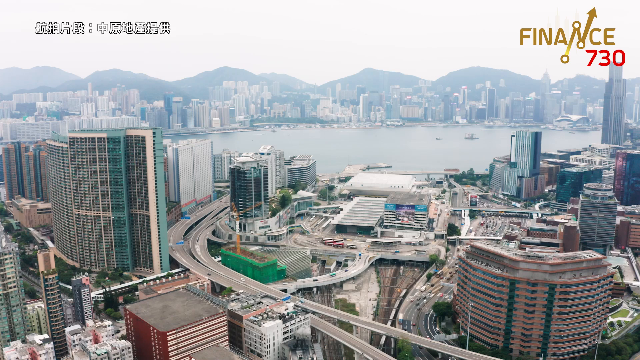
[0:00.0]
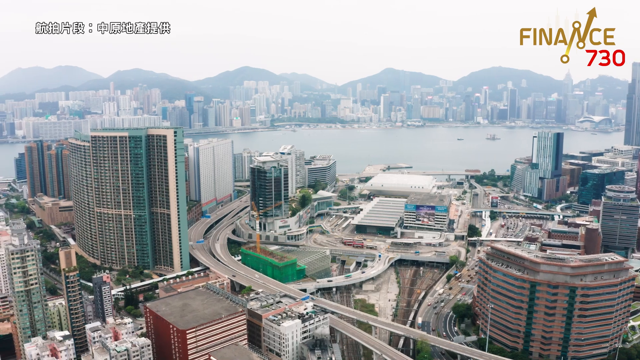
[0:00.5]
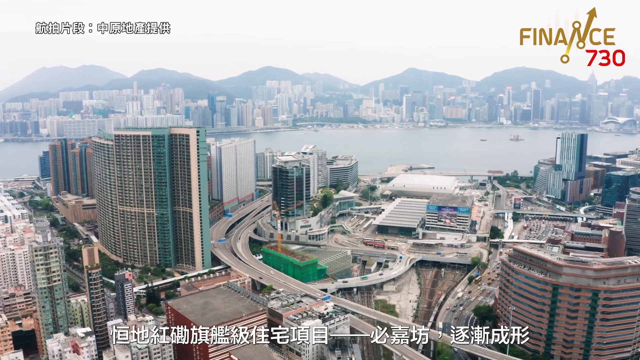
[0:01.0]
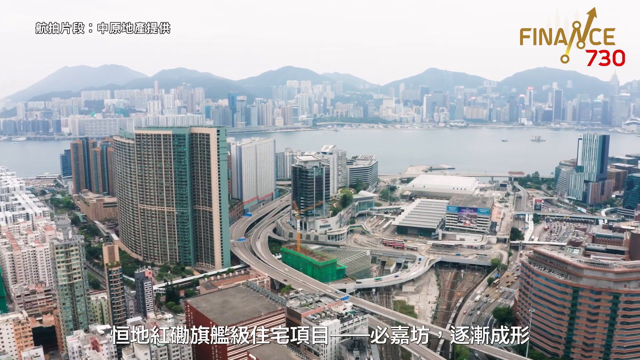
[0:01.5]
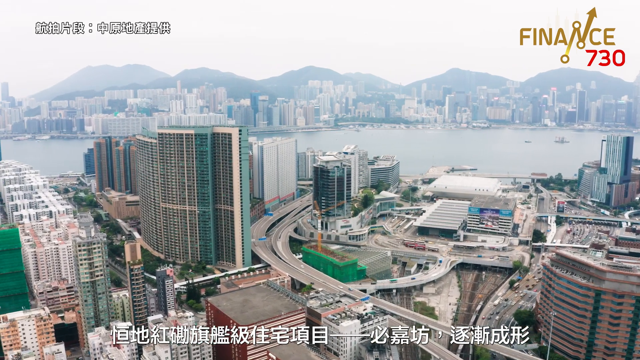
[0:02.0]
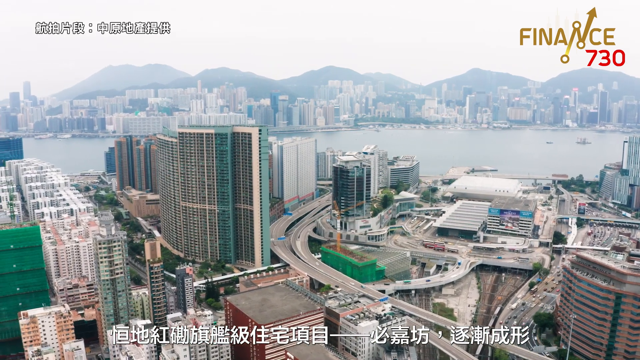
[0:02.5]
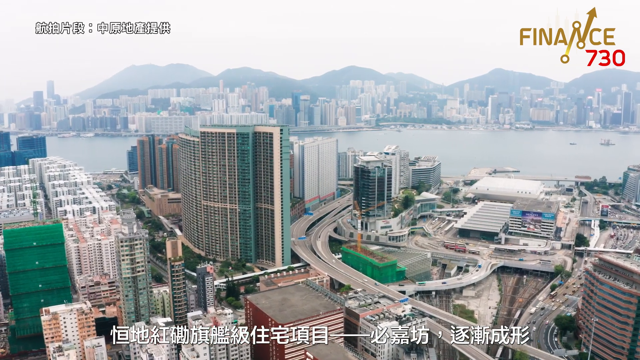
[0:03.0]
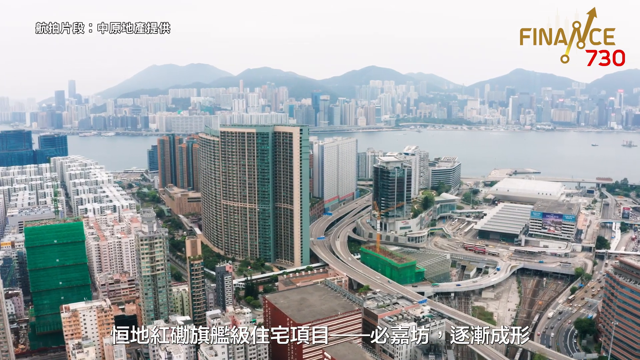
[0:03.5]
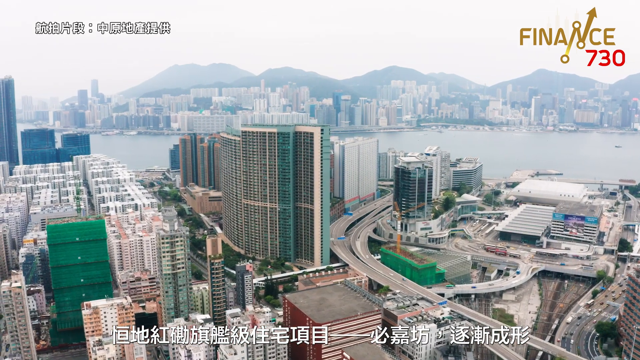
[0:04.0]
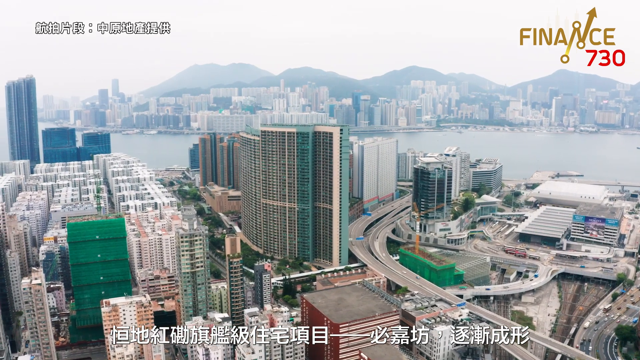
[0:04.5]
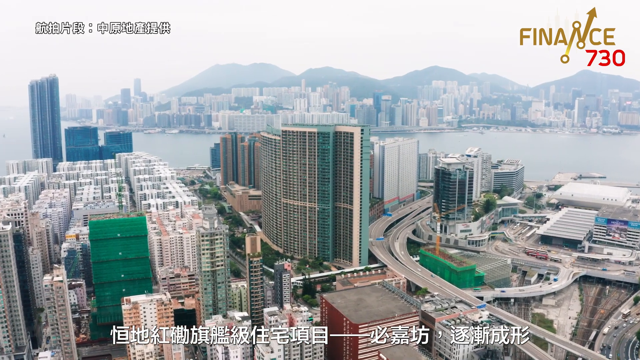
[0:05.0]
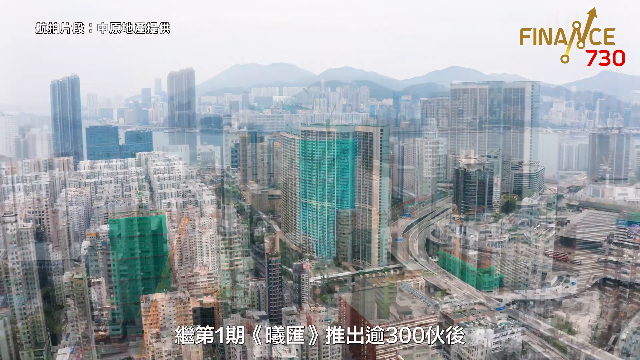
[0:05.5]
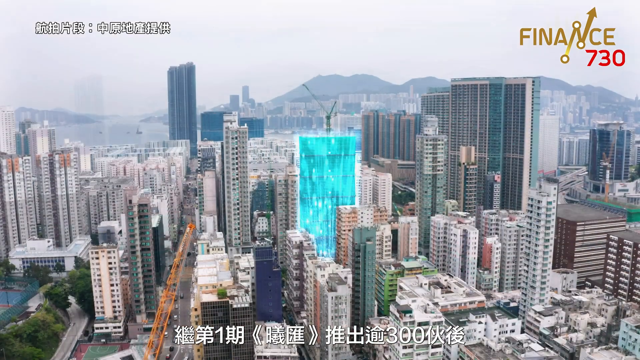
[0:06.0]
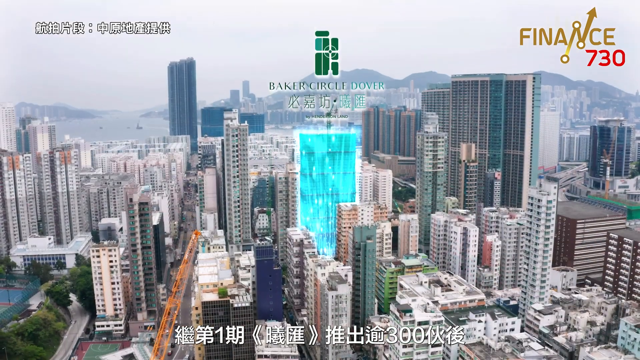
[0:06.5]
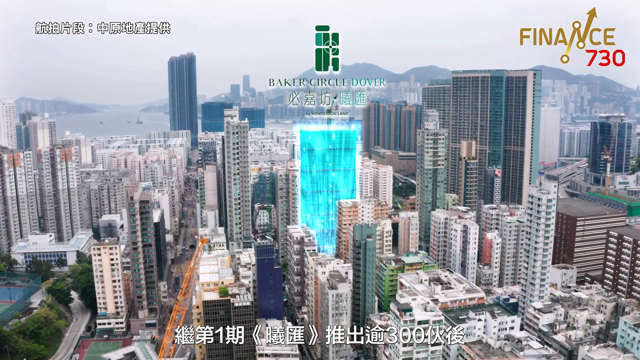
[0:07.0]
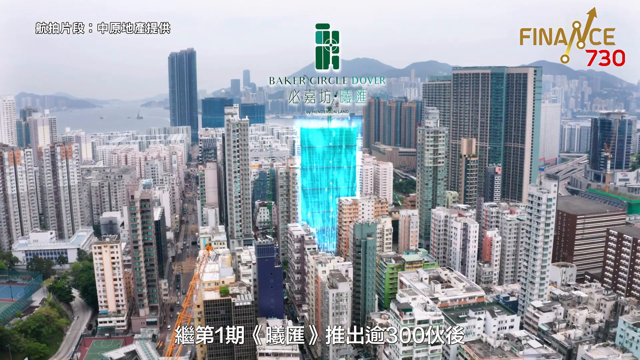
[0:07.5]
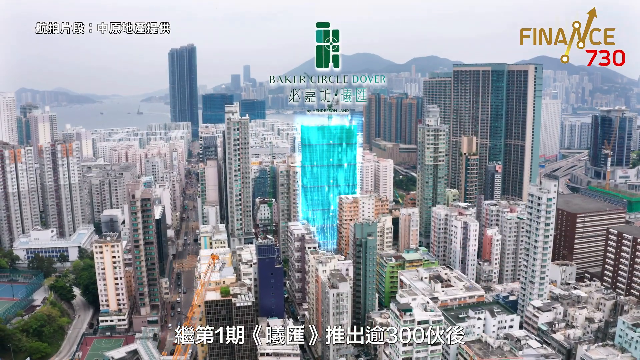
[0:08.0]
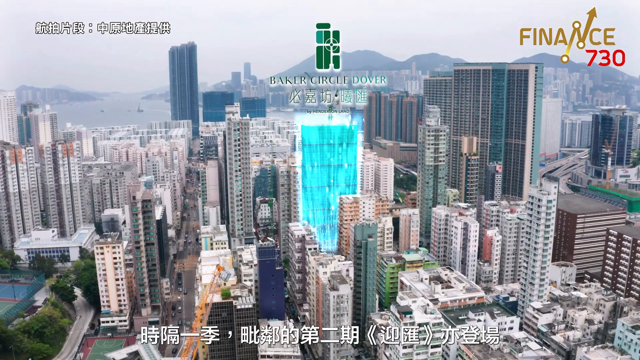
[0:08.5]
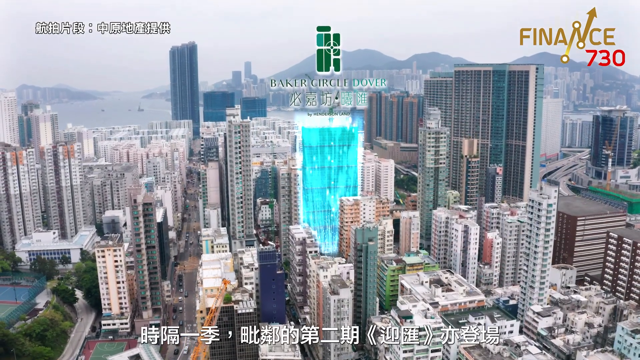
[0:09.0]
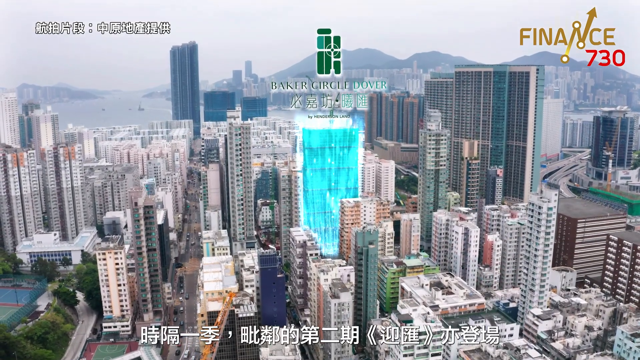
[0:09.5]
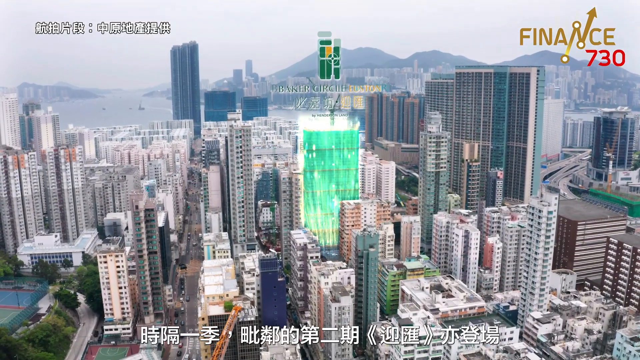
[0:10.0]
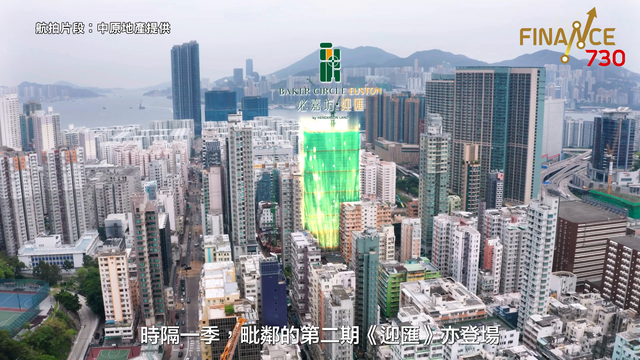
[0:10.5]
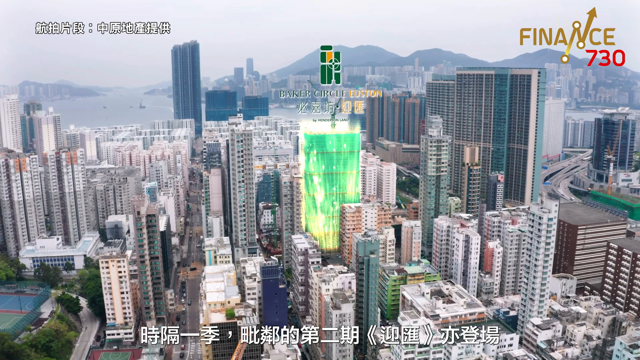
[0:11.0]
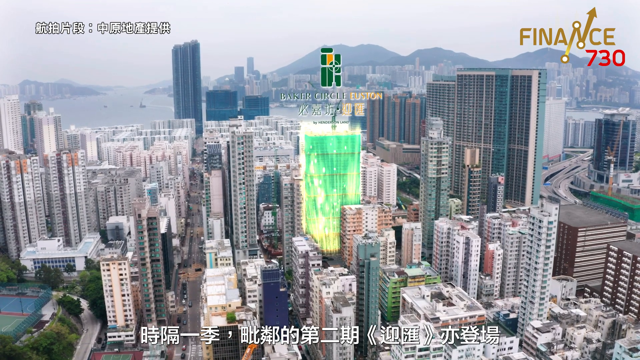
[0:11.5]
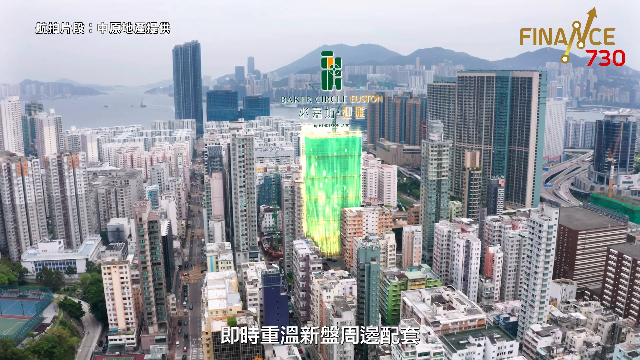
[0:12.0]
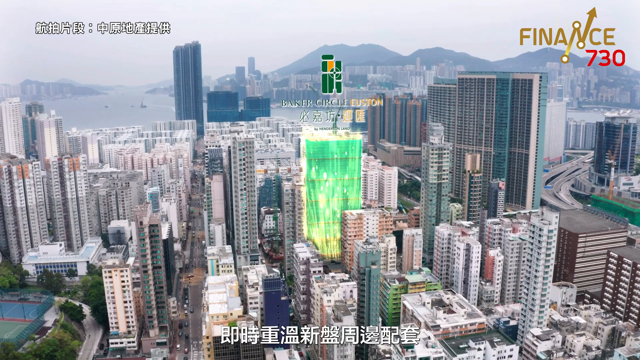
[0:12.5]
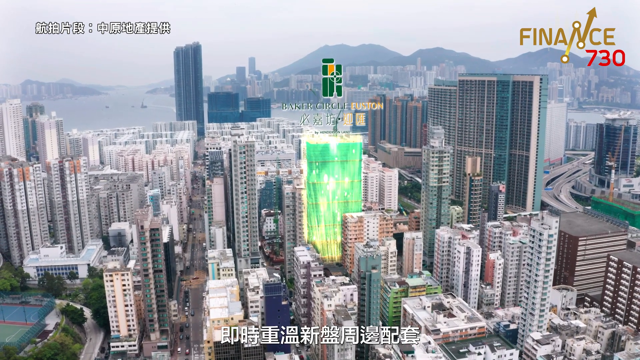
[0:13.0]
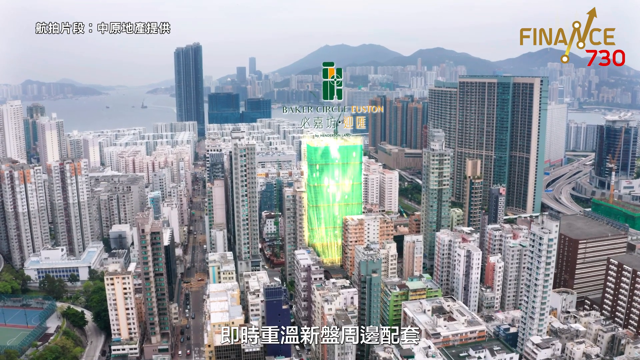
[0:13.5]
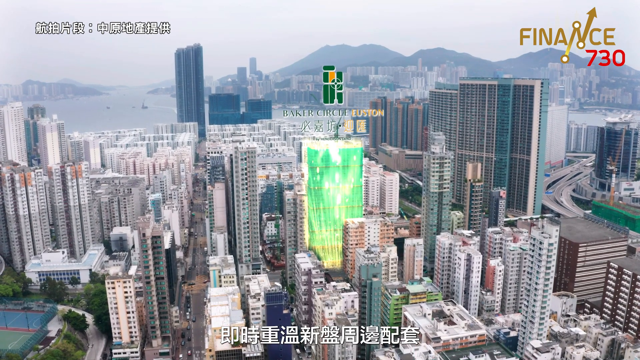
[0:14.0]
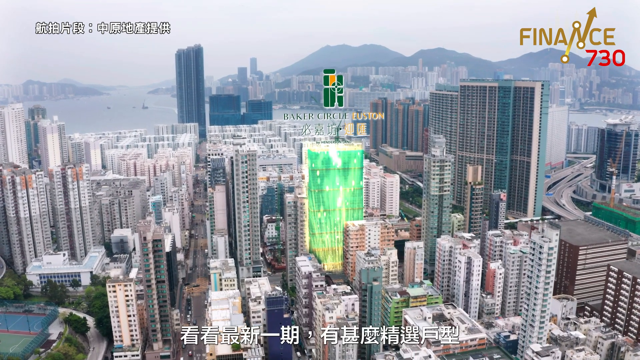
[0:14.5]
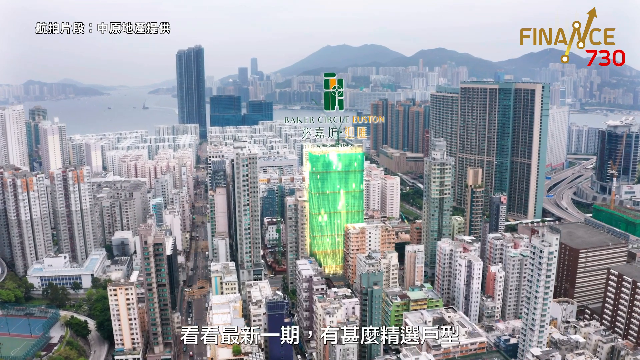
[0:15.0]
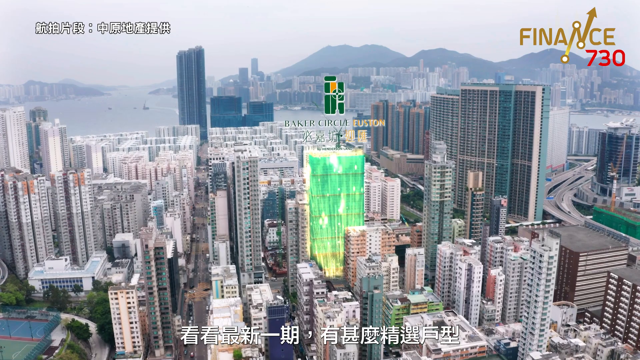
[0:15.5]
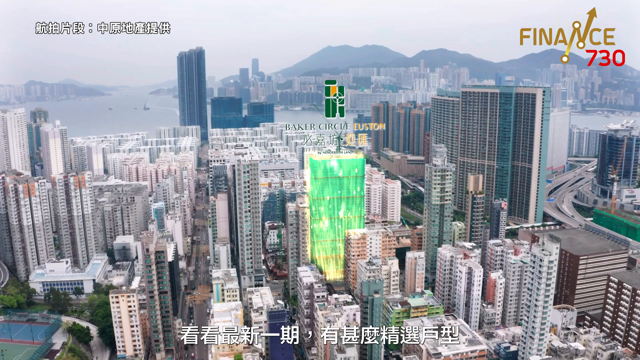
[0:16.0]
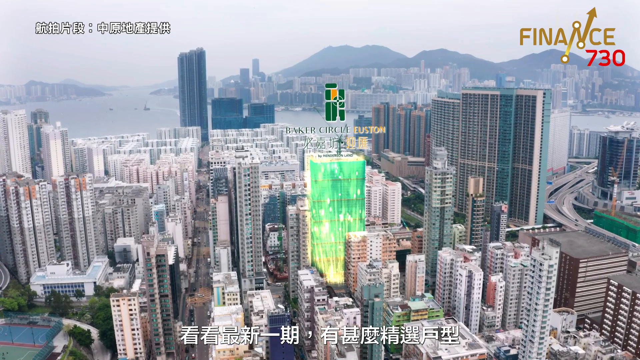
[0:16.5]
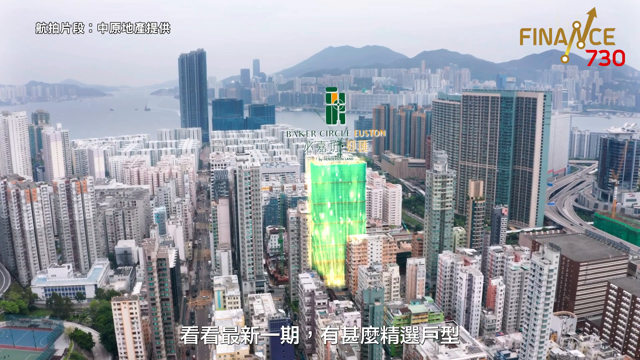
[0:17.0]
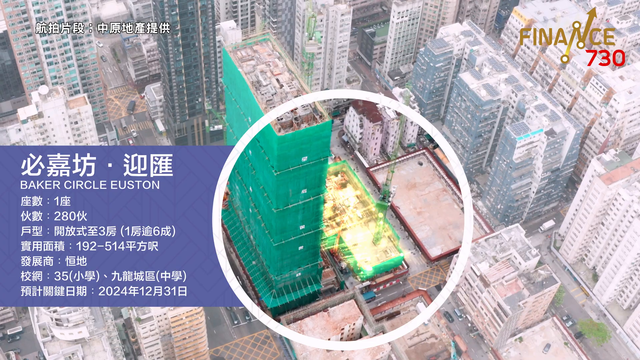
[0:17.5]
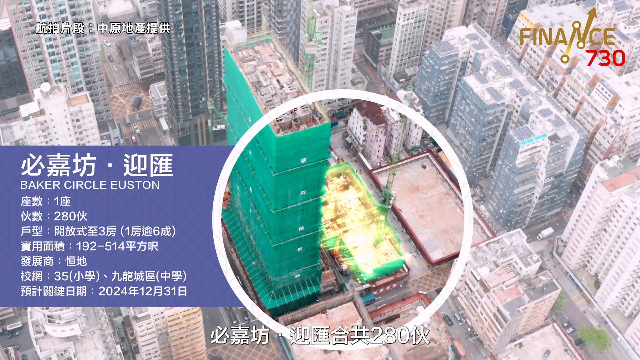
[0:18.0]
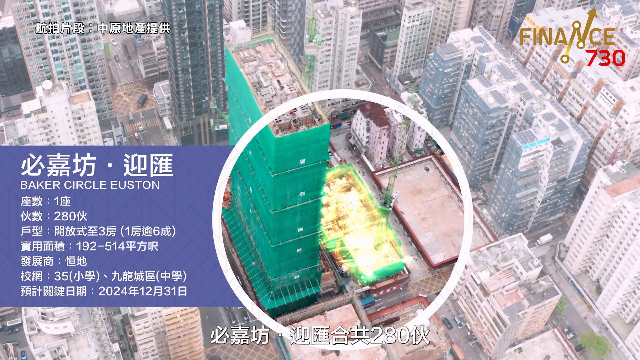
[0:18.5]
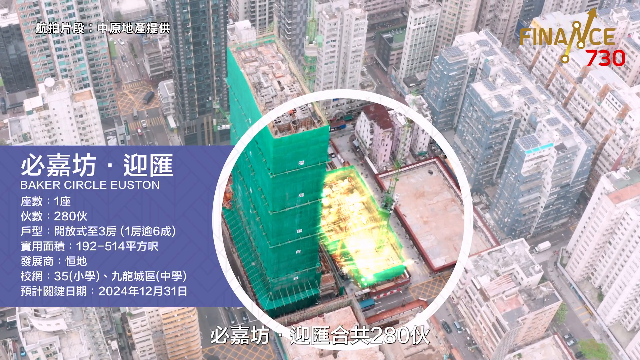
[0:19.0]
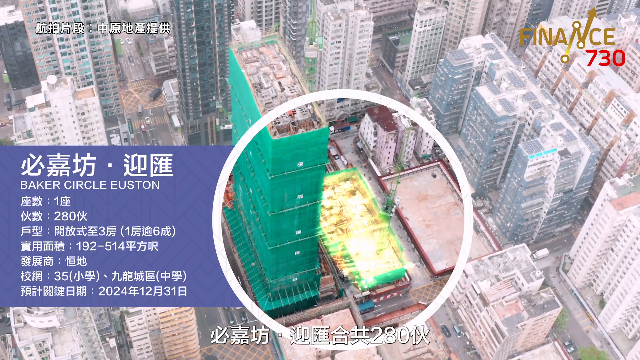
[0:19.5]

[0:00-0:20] An overhead view shows a city with water around it, highways running through it and lots of high-rise buildings, with some mountains in the background on the other side of the water. As the view scans across, the words "Baker Circle Dover" pop up at the top and a building is highlighted, possibly an office building or an apartment building. In the upper right corner the text reads "Finance 730", and there is also some Asian writing on the screen that cannot be read. The highlighted building turns from blue to yellow to green. Then, off to the left side, a blue box pops up that says "Baker Circle Houston", and a circle is drawn around a large building that appears to be very tall, possibly the building the blue box refers to.